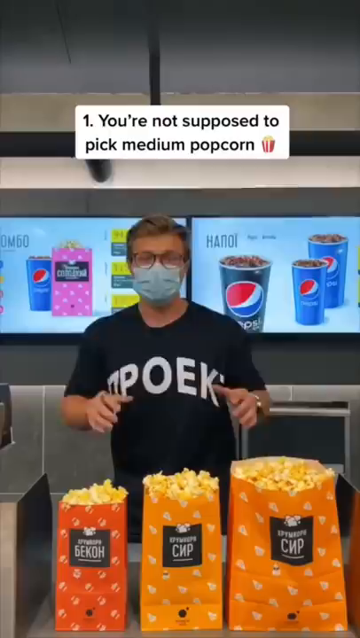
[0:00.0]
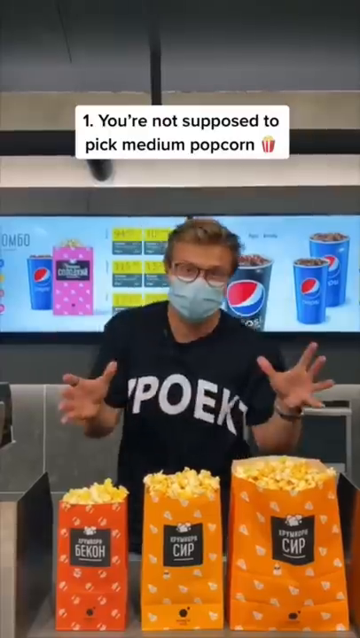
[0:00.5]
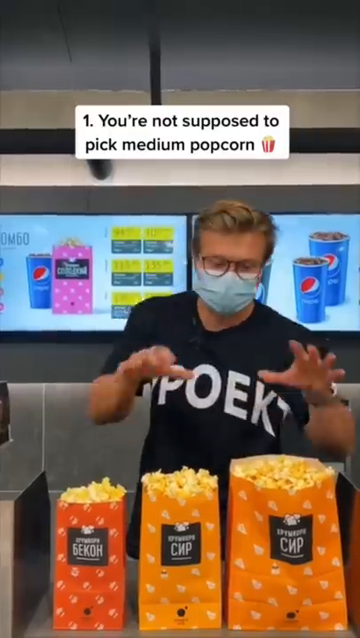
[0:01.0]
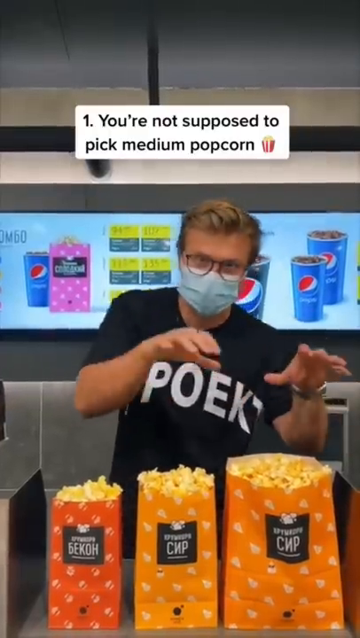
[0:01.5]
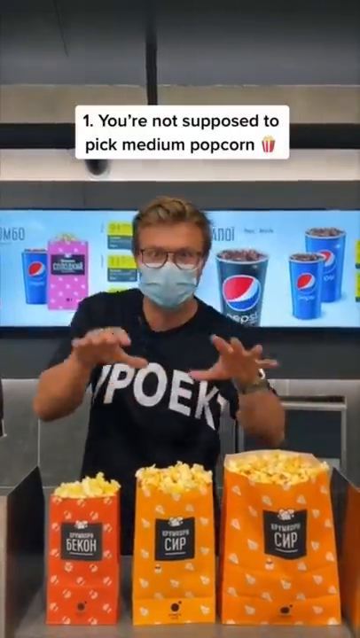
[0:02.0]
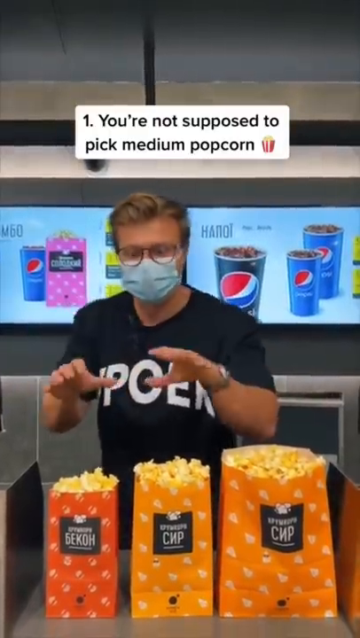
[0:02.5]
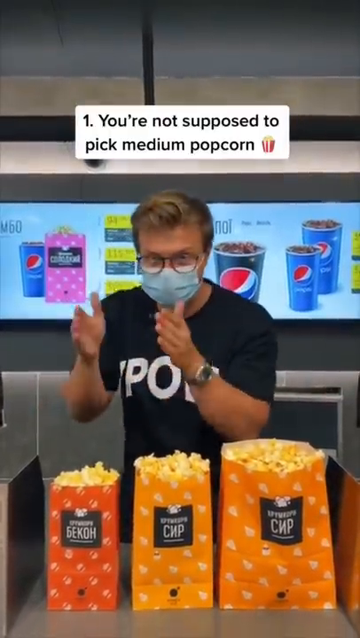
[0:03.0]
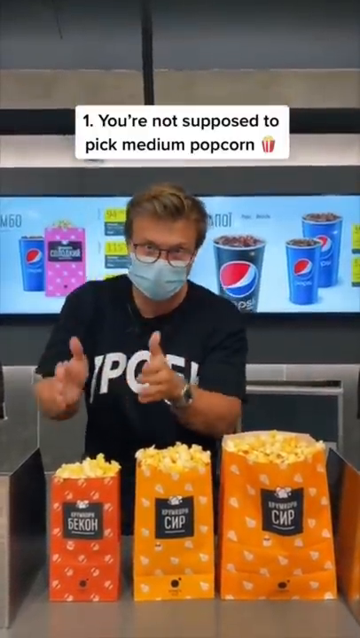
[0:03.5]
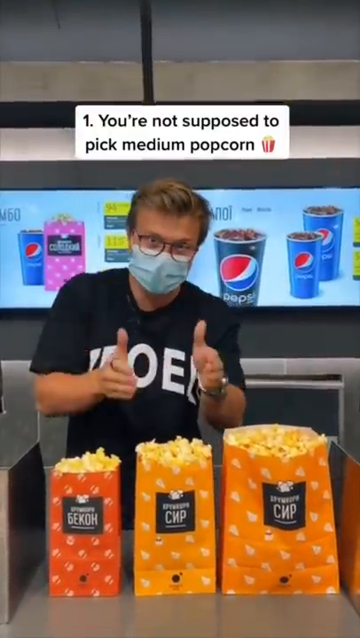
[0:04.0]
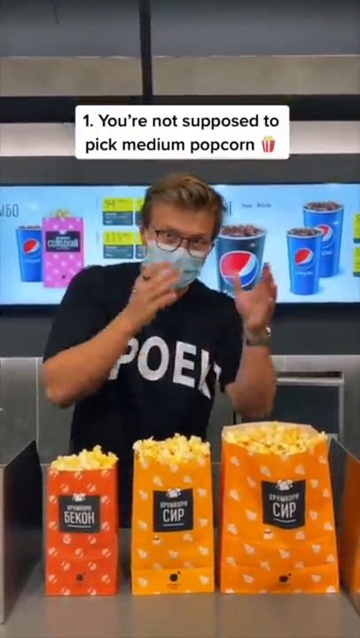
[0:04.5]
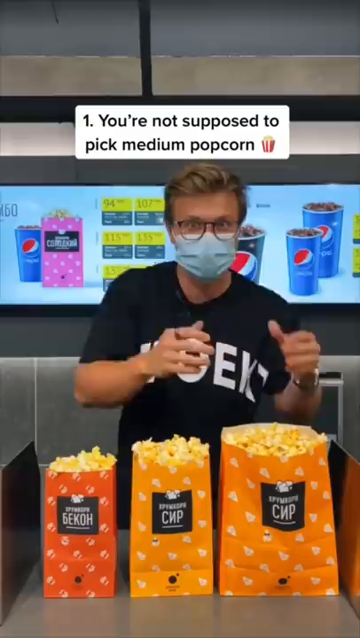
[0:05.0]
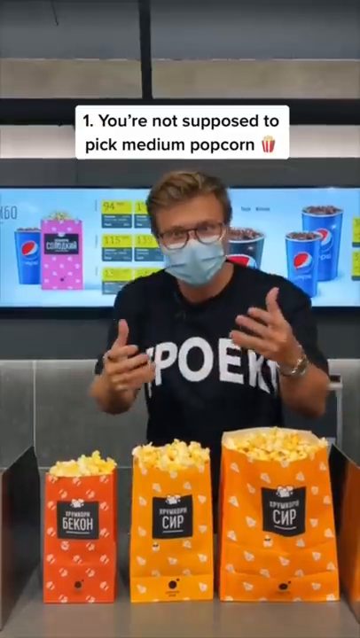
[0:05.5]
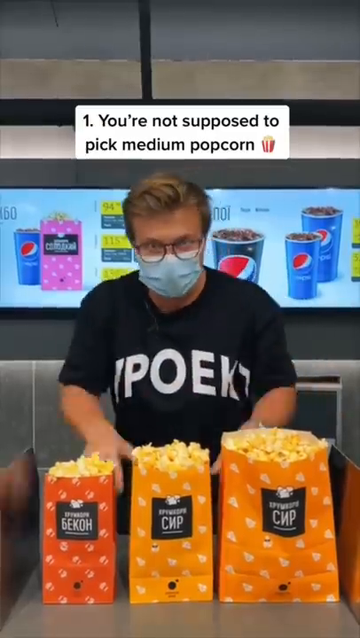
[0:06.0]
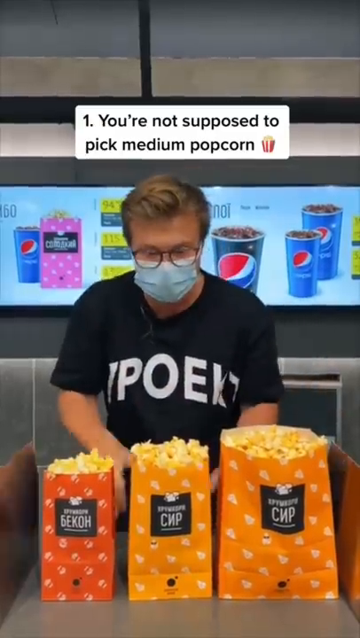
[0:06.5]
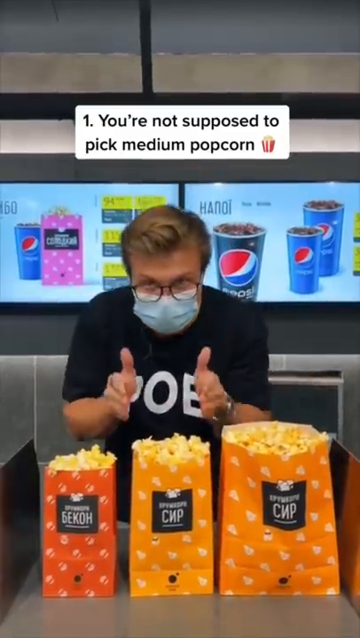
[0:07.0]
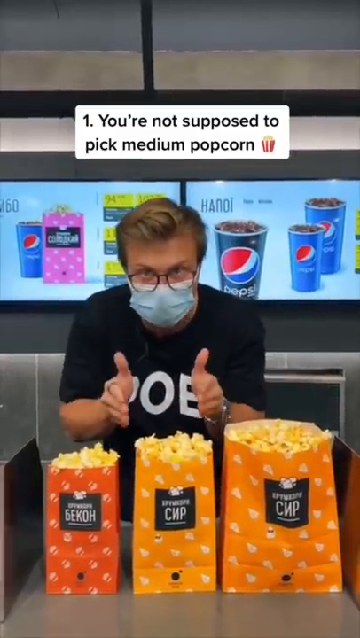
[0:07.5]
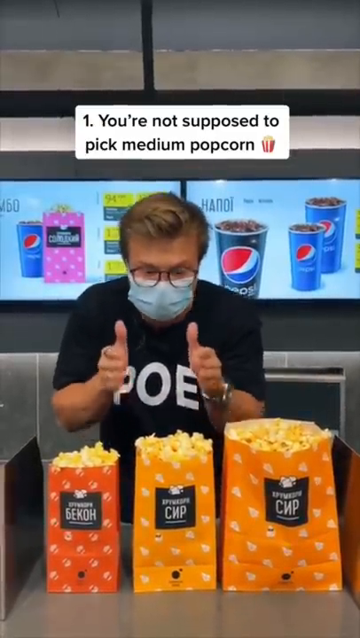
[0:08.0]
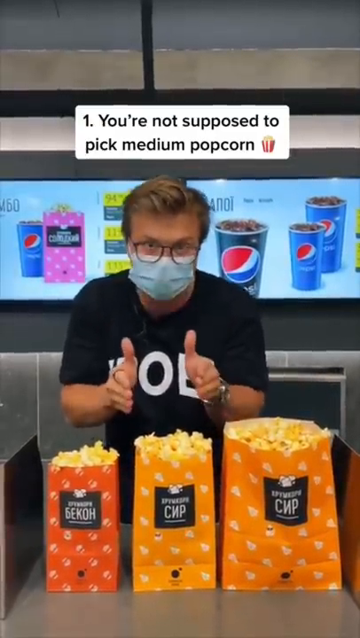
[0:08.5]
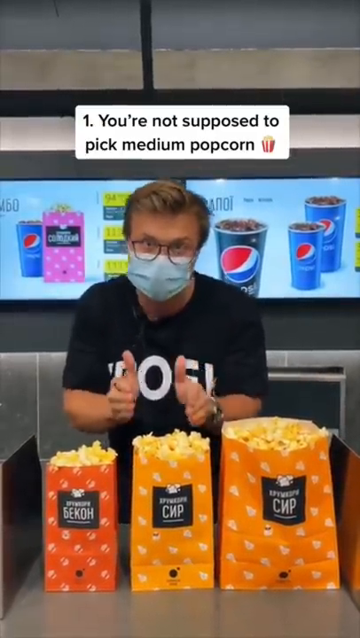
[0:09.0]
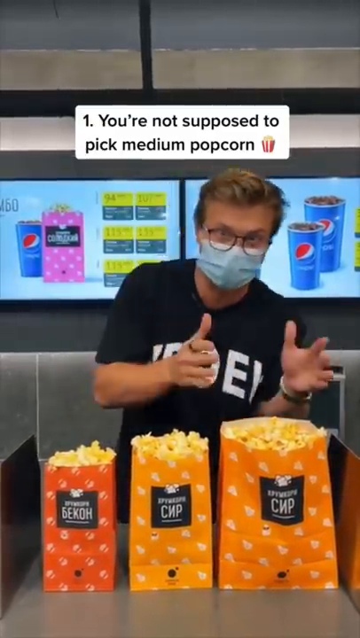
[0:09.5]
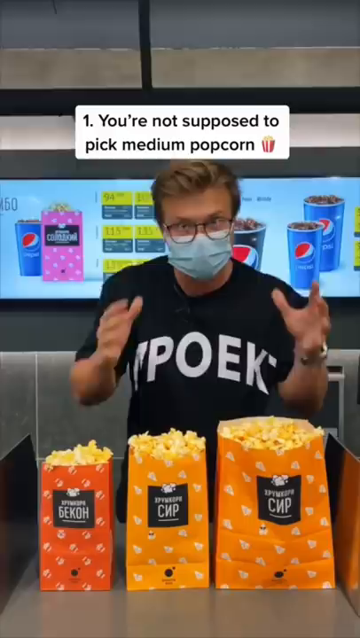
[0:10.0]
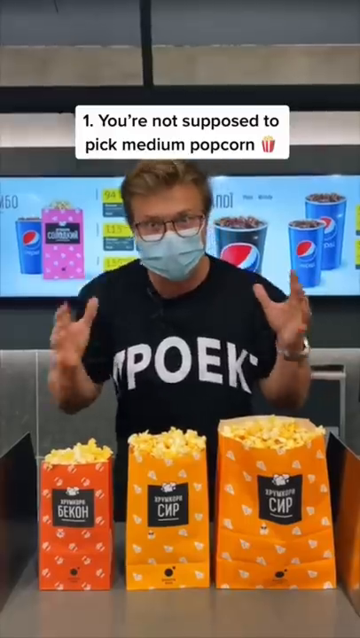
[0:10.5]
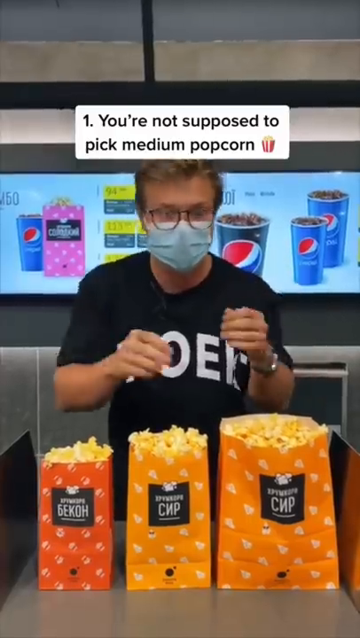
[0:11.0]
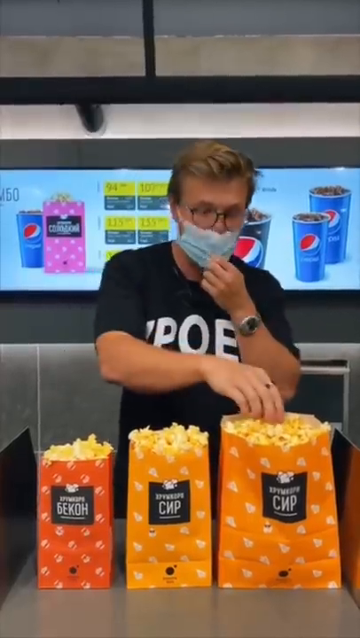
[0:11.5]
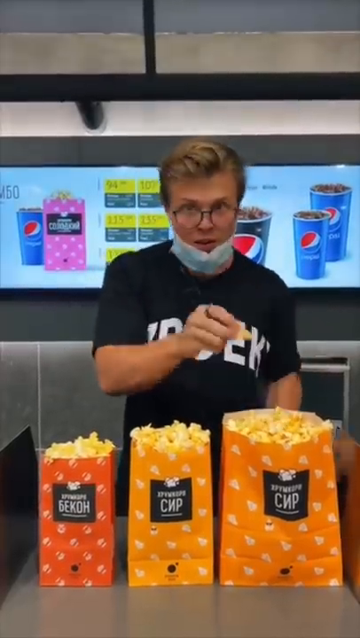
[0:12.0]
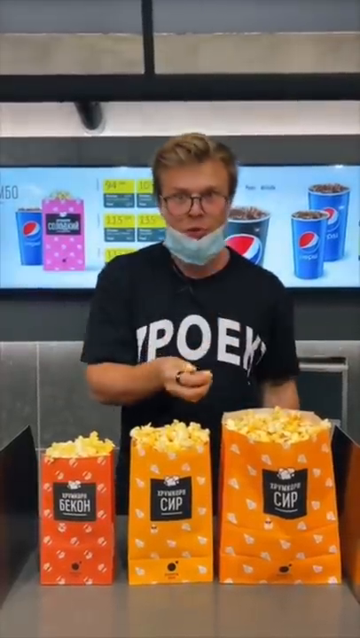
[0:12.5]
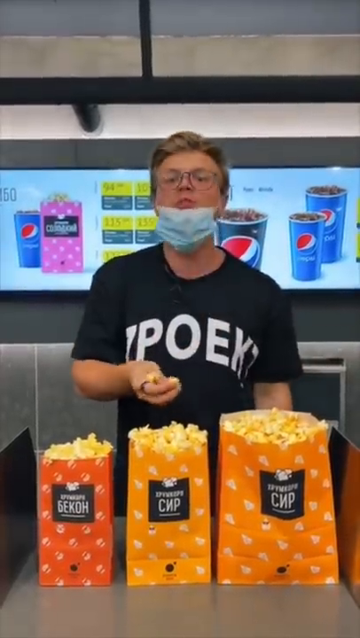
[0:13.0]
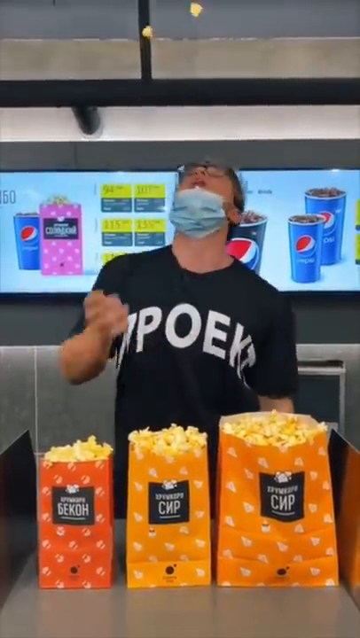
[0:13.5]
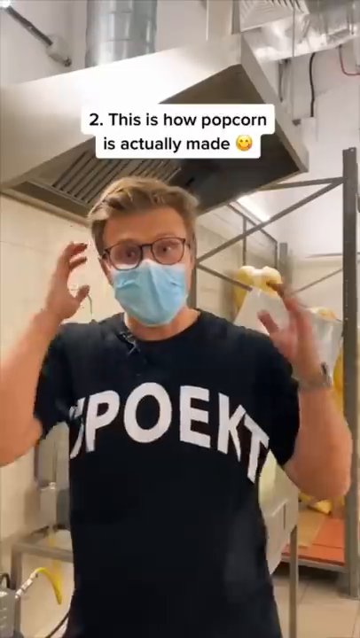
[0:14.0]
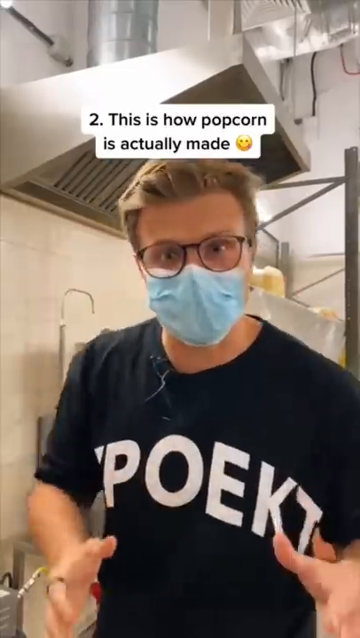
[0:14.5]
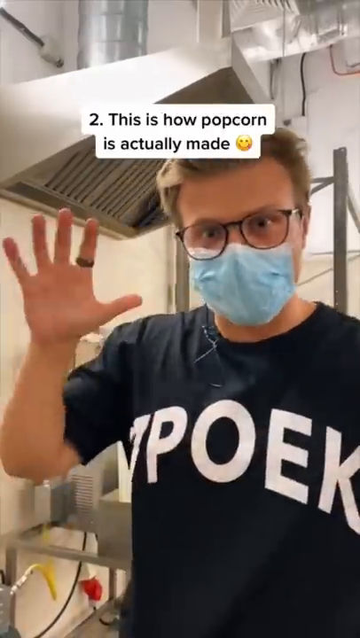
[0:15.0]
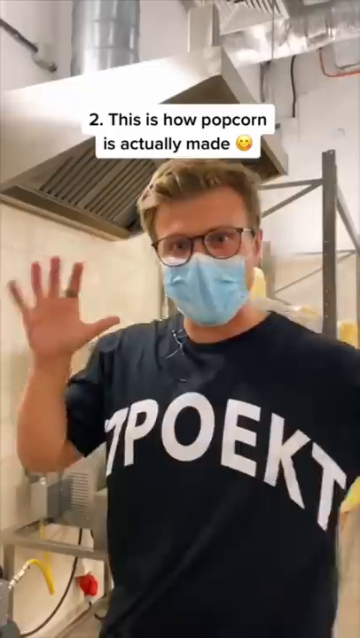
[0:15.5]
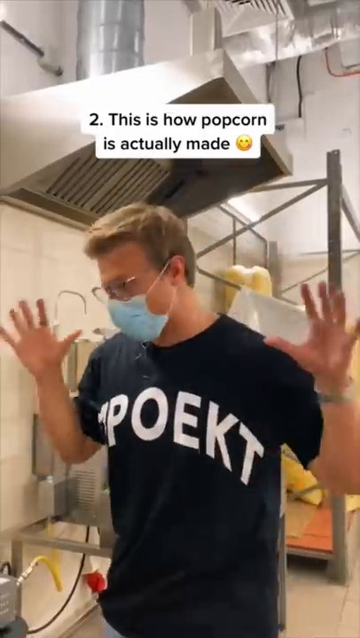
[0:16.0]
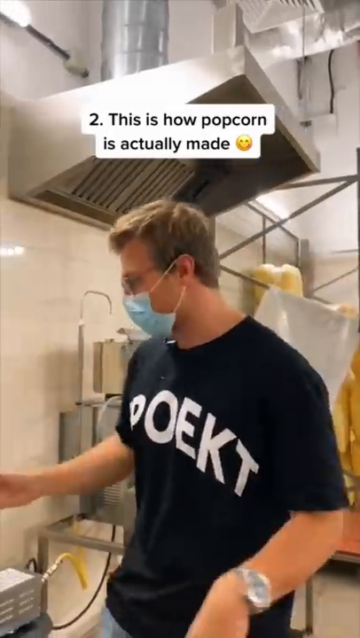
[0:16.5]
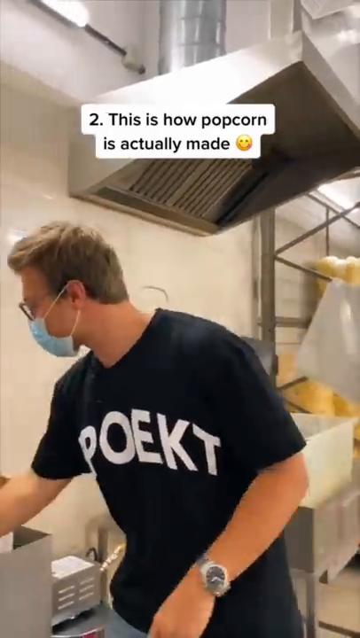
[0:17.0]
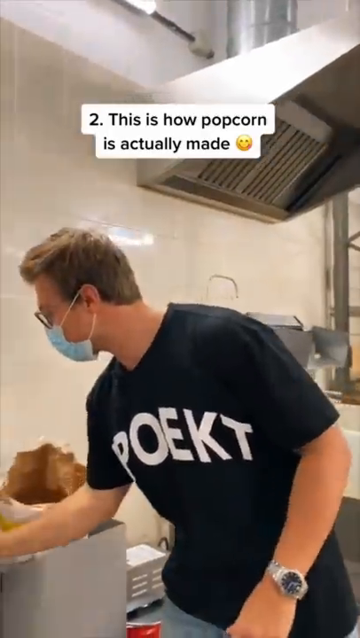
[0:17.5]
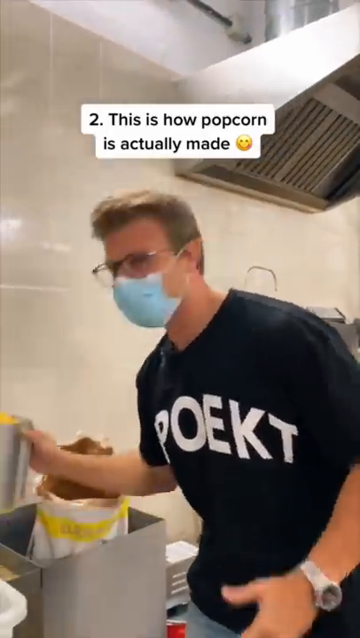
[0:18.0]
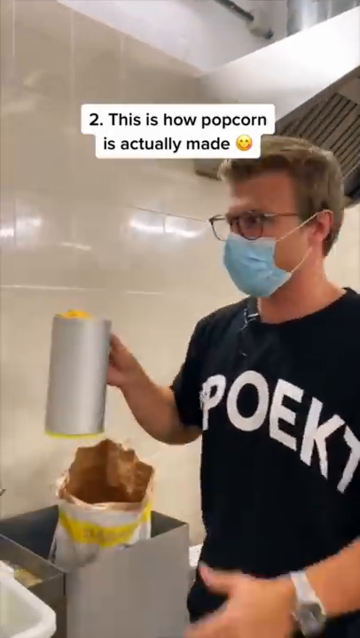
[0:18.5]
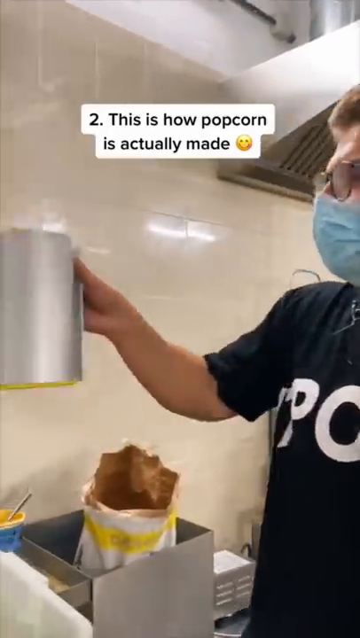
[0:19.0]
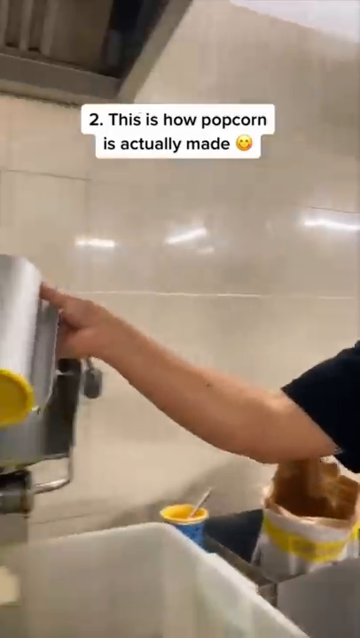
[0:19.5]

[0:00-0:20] The video is labeled Cinema Secrets Revealed, Part 1. A white man is filling up a soda at a soda machine. He wears a black shirt with white writing on it that cannot be made out, a mask and glasses, and he looks at the camera. Behind him is what looks like a theater, with a screen showing Pepsis and something yellow. The man is excited and talking, with three bags of popcorn in front of him, and he points at them excitedly. Text on screen says "you're not supposed to pick medium popcorn" while he points at the medium bag, very animated with his hands. He eats popcorn out of the big bag, throwing three pieces up and catching one of them in his mouth. He pulls his mask down to throw a couple of pieces of popcorn and says, "this is how popcorn is actually made." The scene moves to the back, where he uses a big giant scoop to scoop into a big machine, apparently a giant popcorn maker.